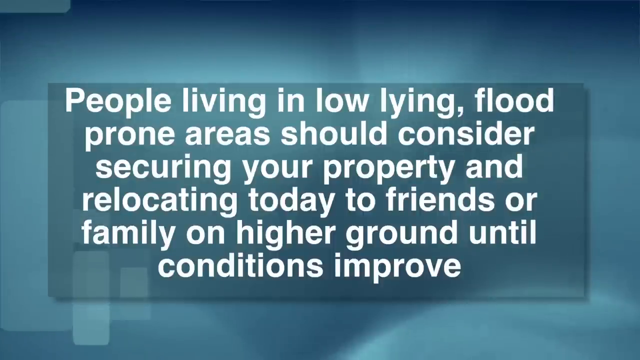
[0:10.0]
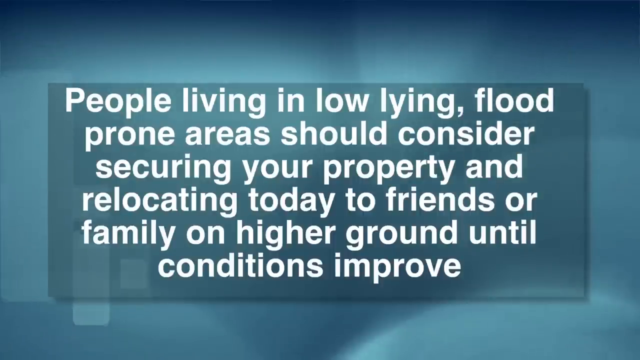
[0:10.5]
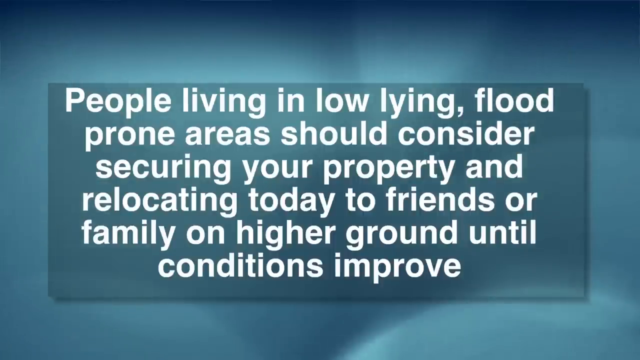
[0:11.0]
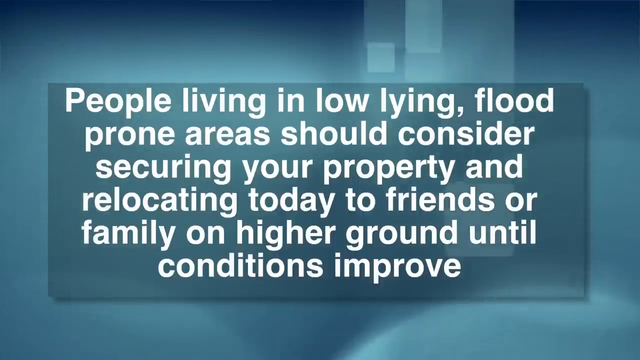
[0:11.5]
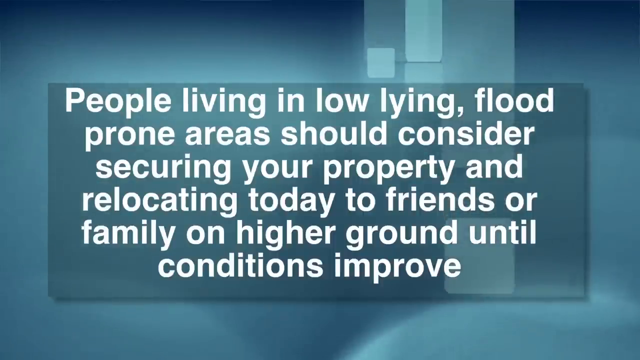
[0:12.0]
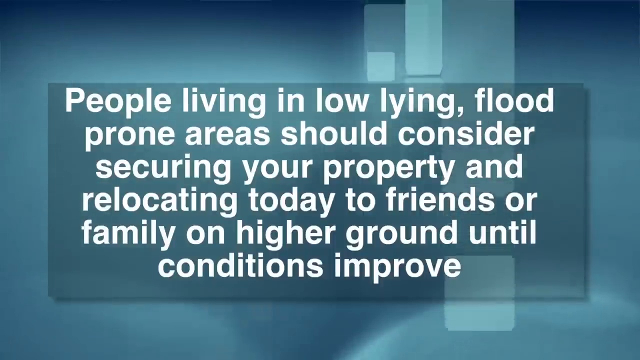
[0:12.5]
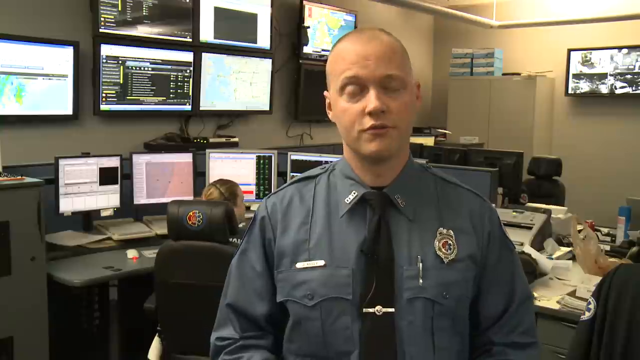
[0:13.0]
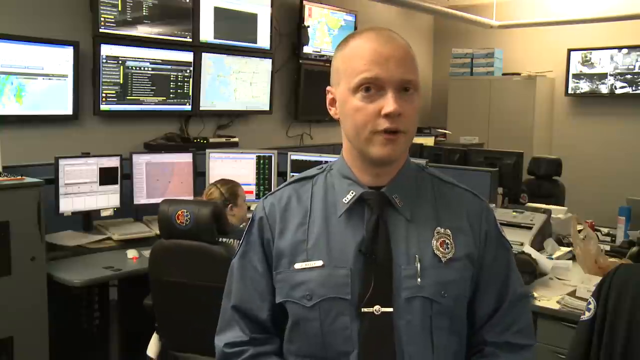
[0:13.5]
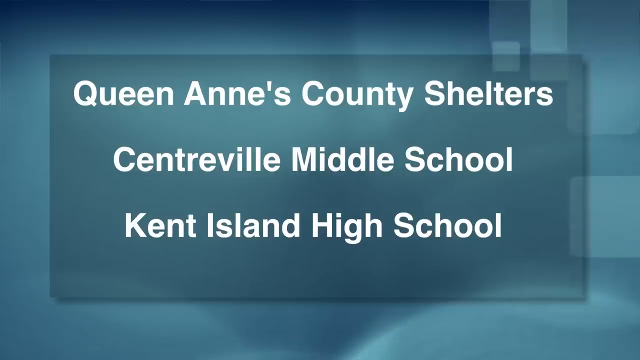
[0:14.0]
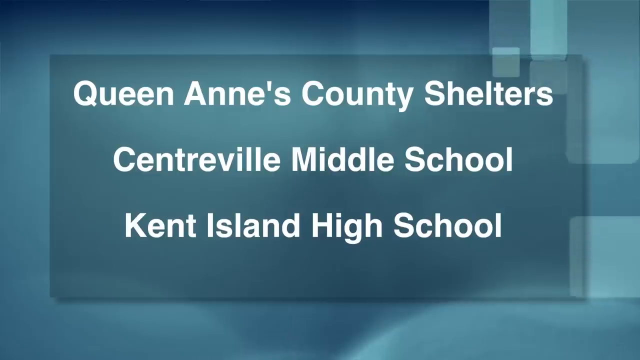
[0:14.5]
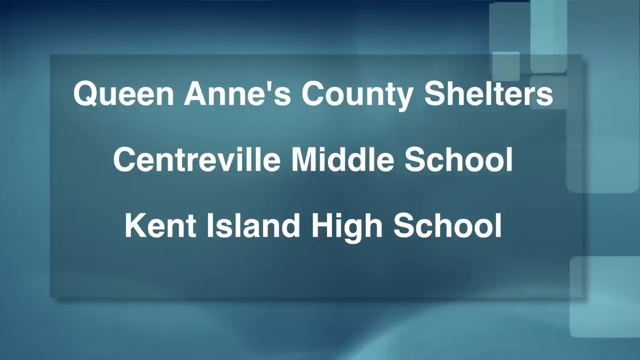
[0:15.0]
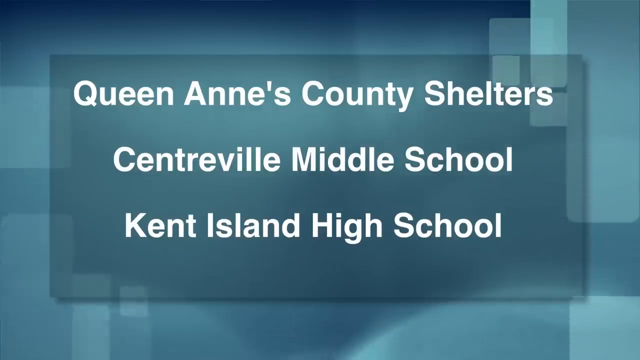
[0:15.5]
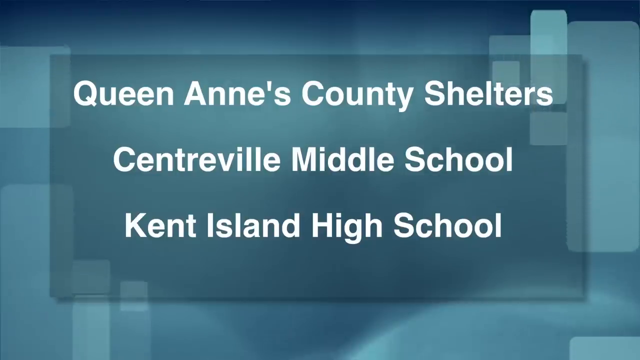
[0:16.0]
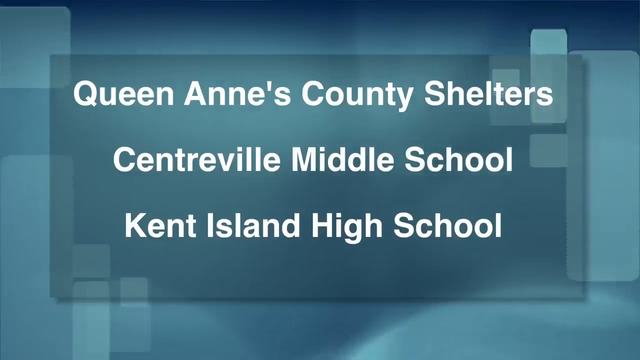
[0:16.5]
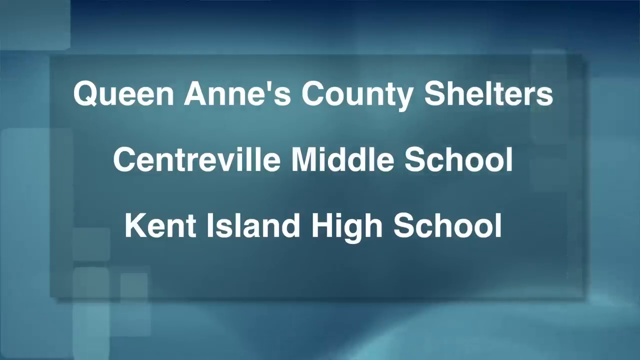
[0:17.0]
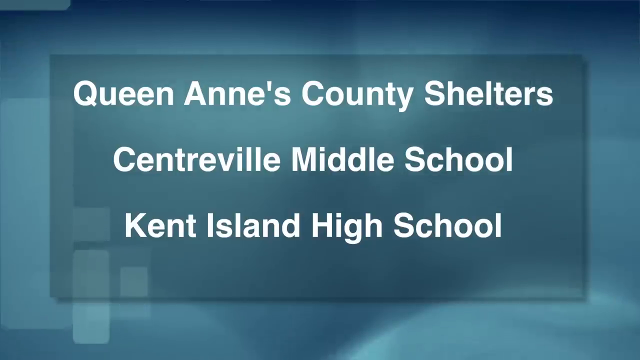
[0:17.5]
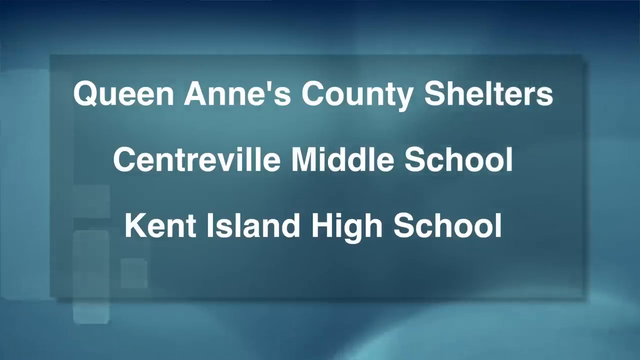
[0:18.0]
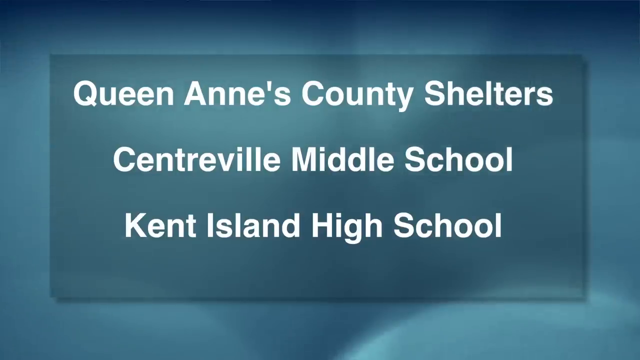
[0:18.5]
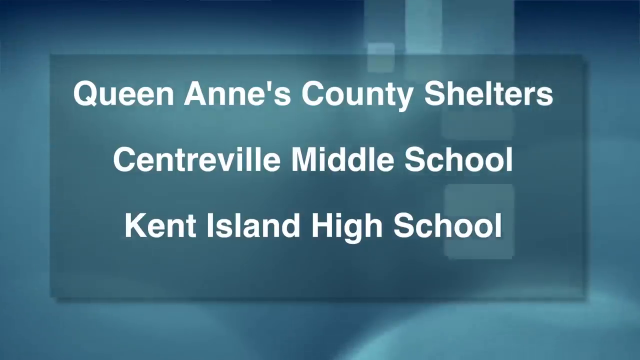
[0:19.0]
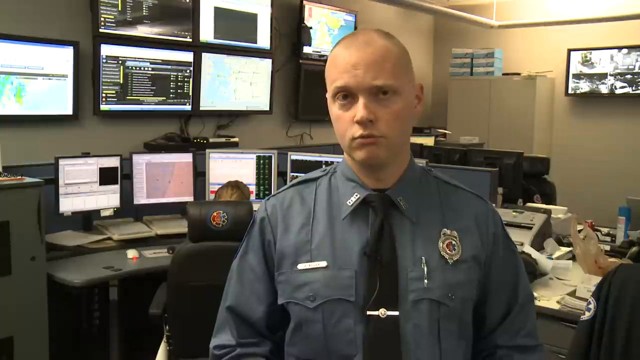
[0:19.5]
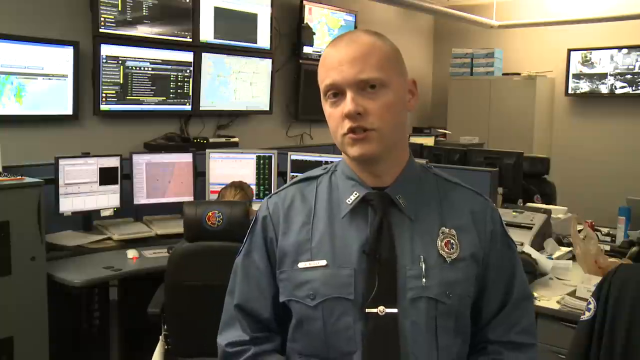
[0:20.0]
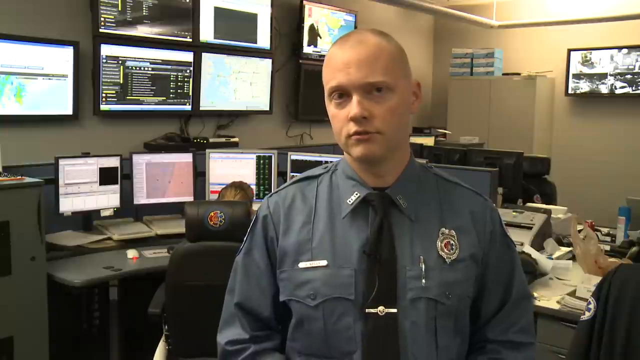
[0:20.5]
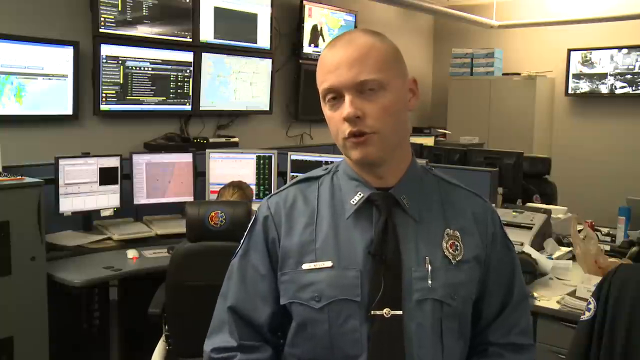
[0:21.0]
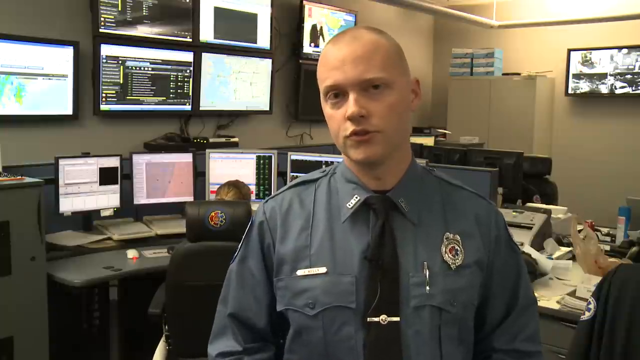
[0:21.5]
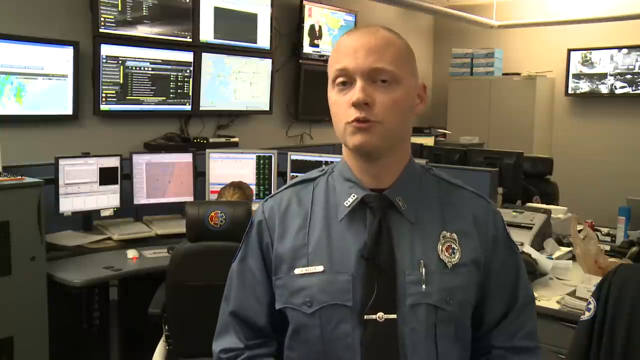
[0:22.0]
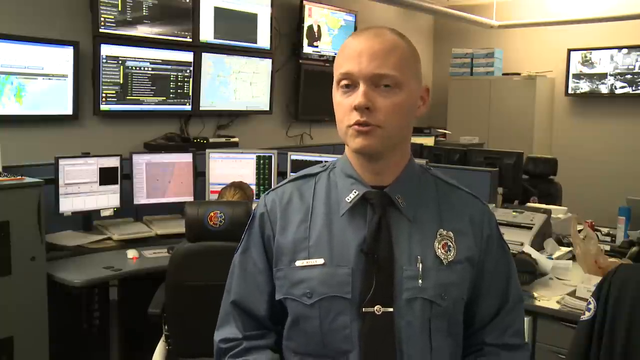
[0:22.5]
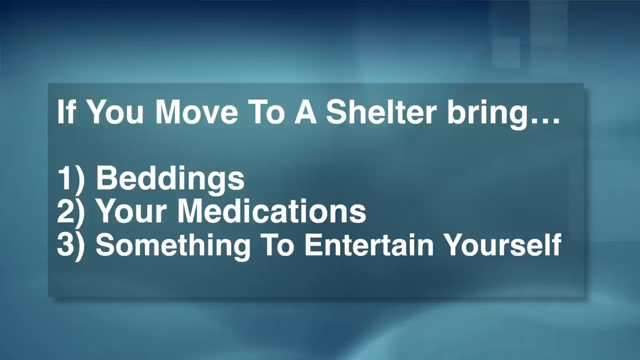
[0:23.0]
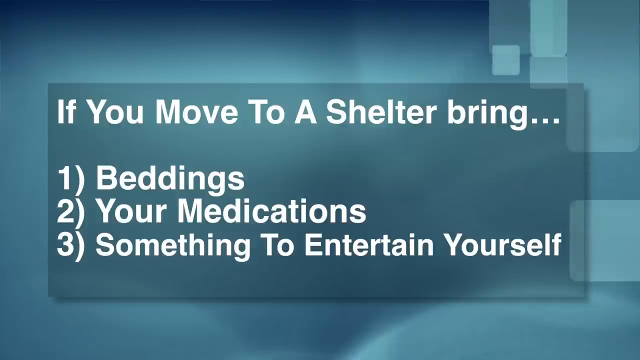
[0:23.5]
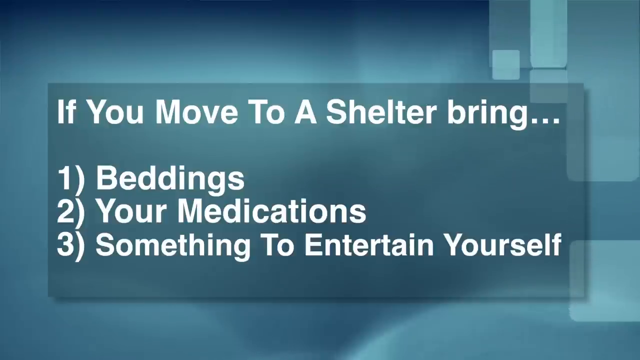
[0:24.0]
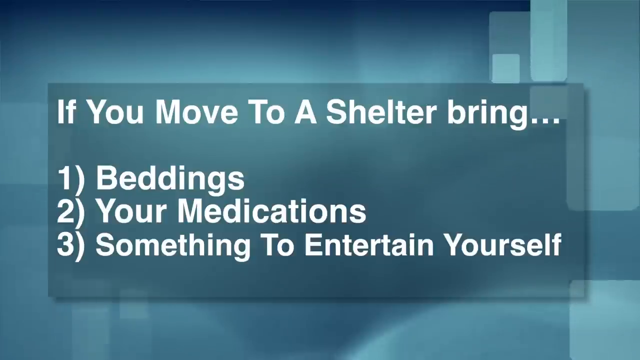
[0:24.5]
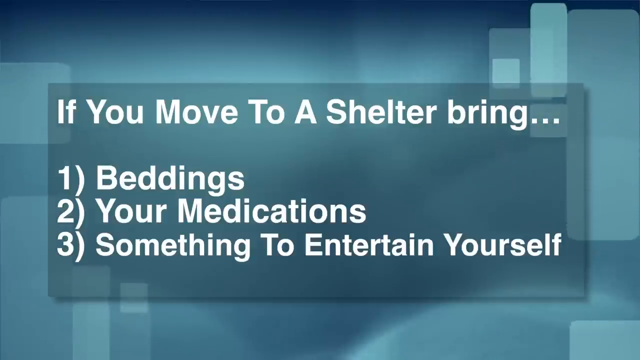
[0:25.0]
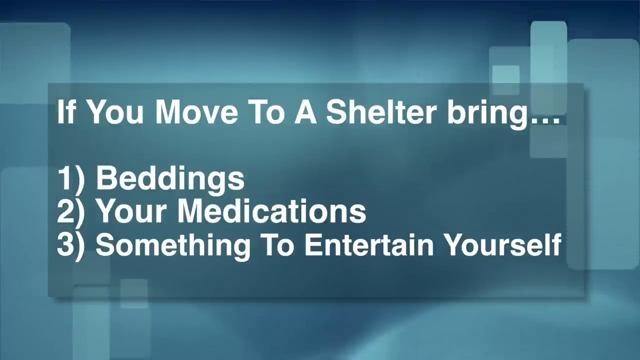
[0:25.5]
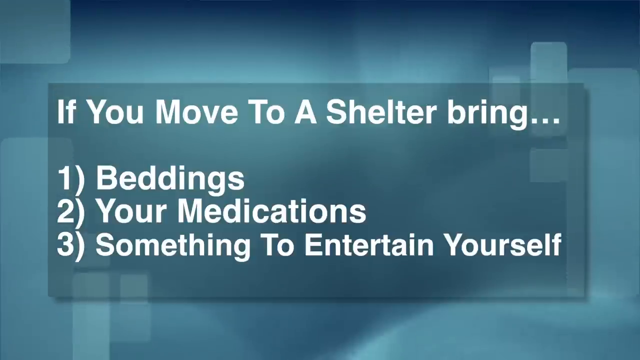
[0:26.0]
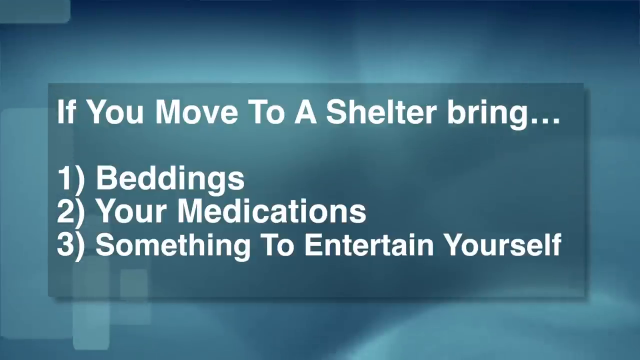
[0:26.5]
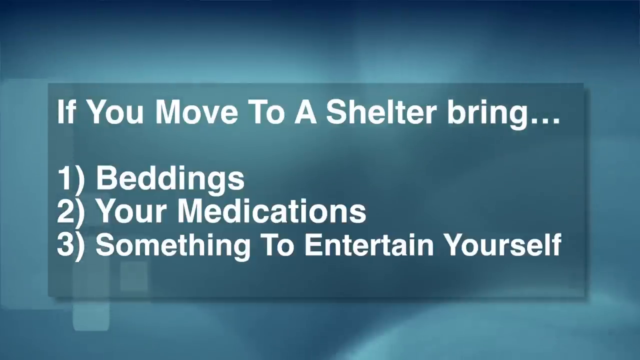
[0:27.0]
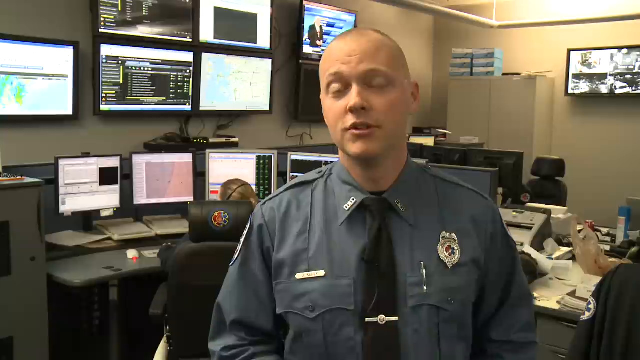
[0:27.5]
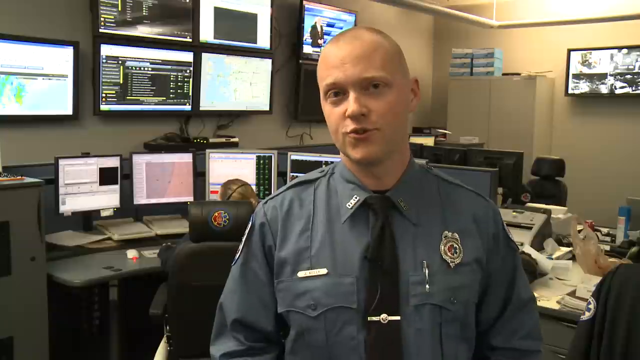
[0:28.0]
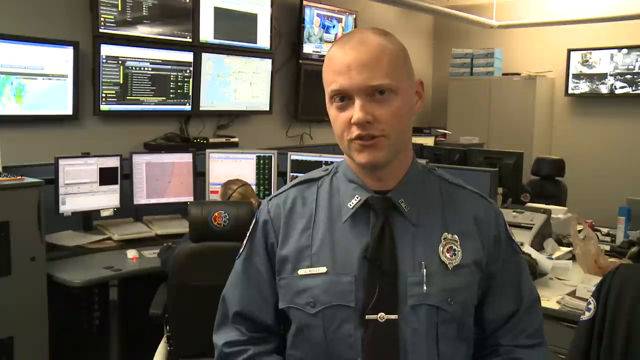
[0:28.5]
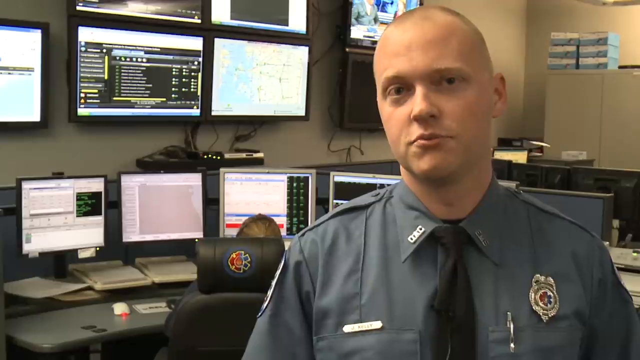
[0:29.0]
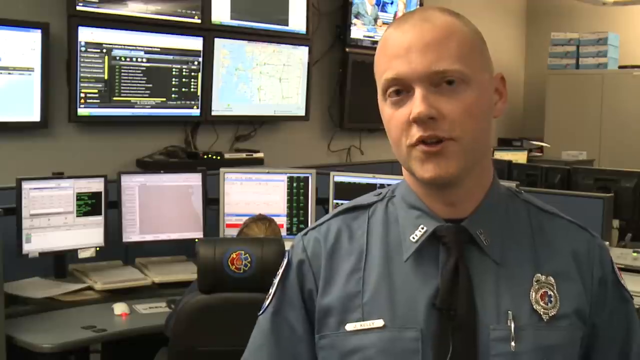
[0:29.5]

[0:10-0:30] The same text screen about low-lying, flood-prone areas is on screen, and then the view changes back to Officer Jeffrey Kelly in the control room of the Department of Emergency Services, where he is addressing the public about an expected disaster. In the background, women wearing headsets man the phone lines for emergency calls. The screen then changes to blue with white text listing Queen Anne's County shelters where people can go in an emergency: Centreville Middle School and Kent Island High School. The view returns to Officer Kelly in the Queen Anne control room as he continues addressing the public. Another blue screen with white text follows, reading "if you move to a shelter bring" with a numbered list: one, beddings; two, your medications; three, something to entertain yourself. The screen then changes back to Officer Kelly speaking from the control room.